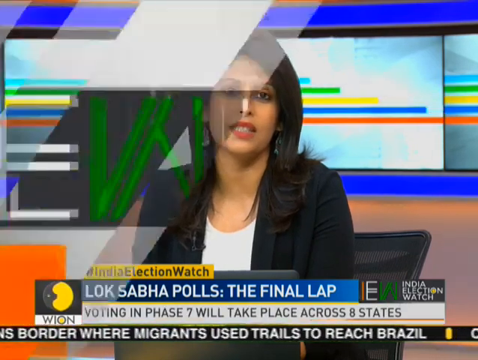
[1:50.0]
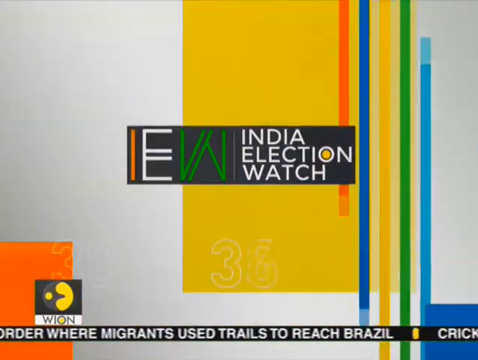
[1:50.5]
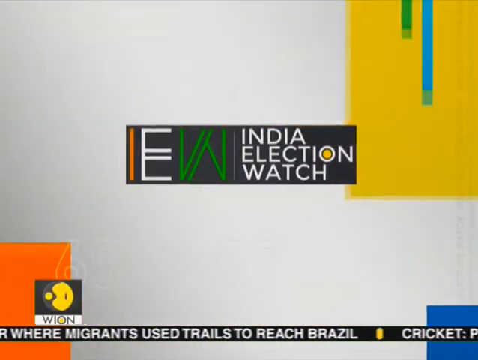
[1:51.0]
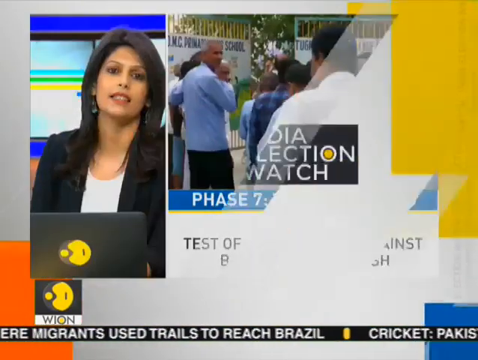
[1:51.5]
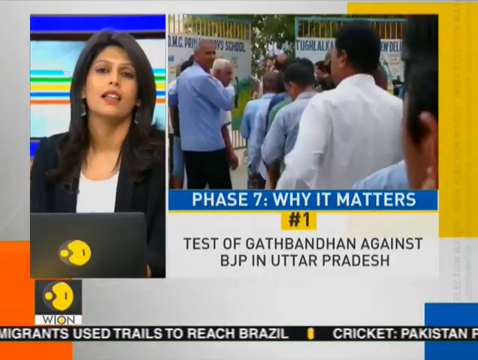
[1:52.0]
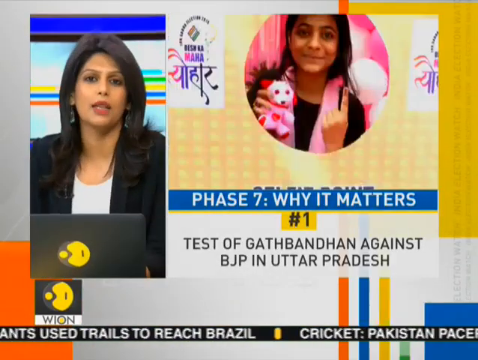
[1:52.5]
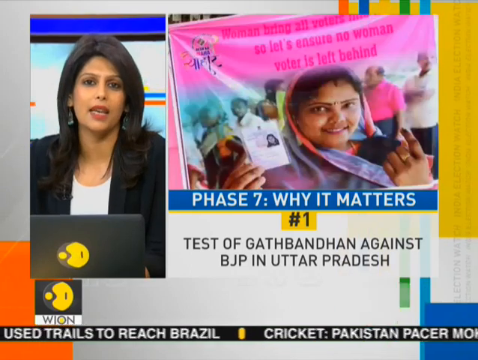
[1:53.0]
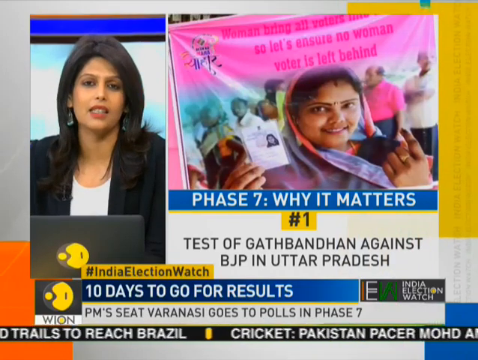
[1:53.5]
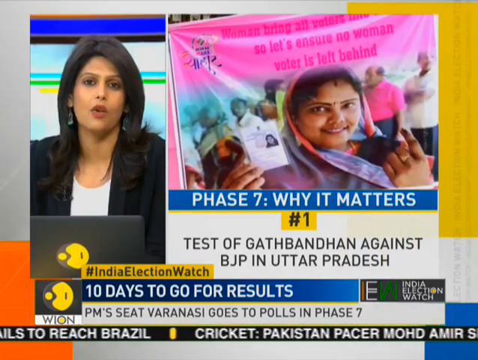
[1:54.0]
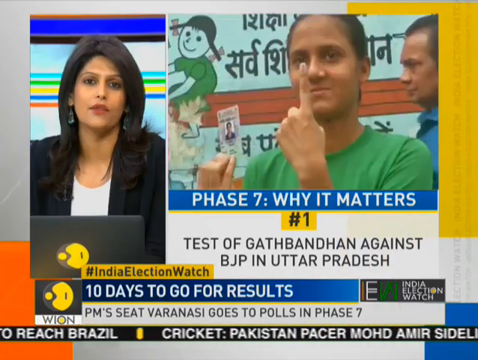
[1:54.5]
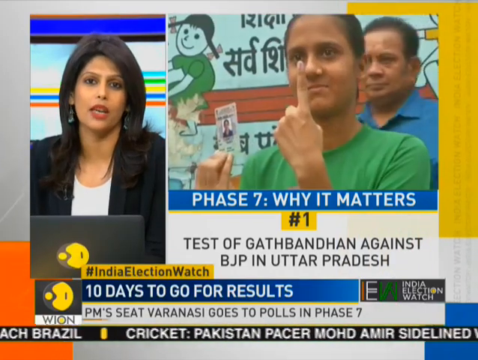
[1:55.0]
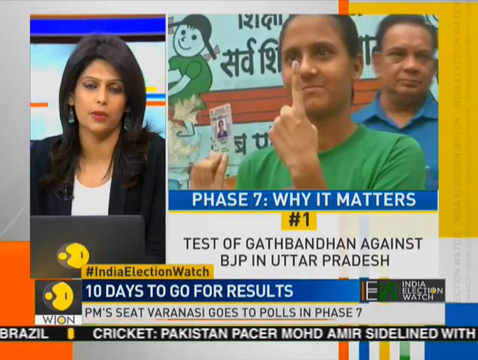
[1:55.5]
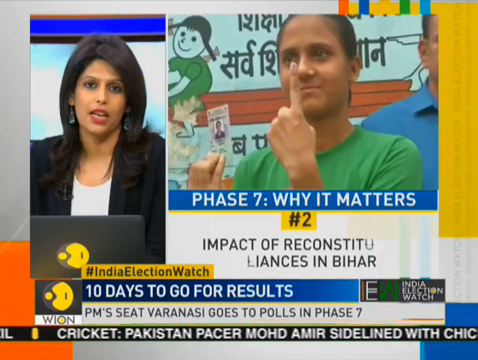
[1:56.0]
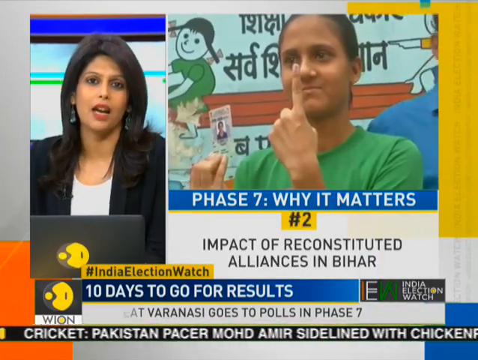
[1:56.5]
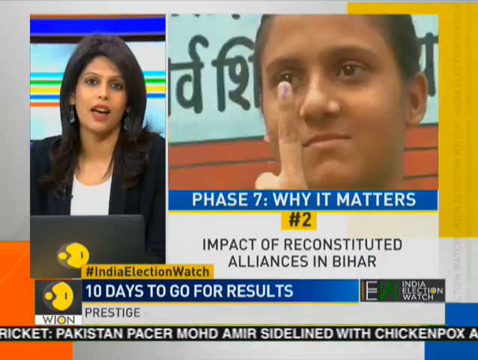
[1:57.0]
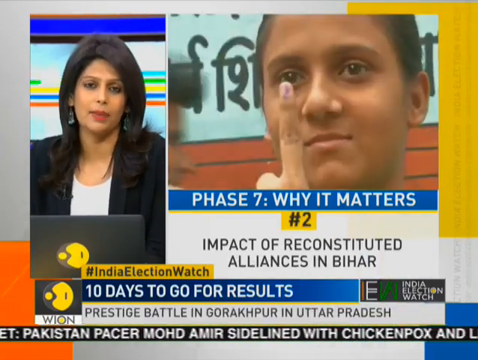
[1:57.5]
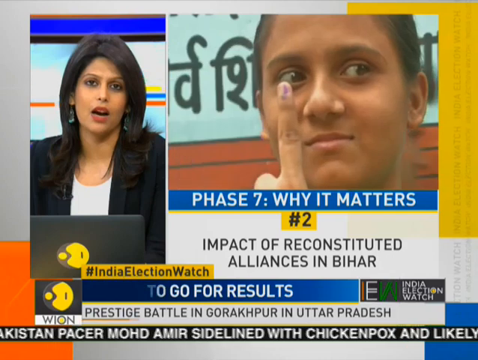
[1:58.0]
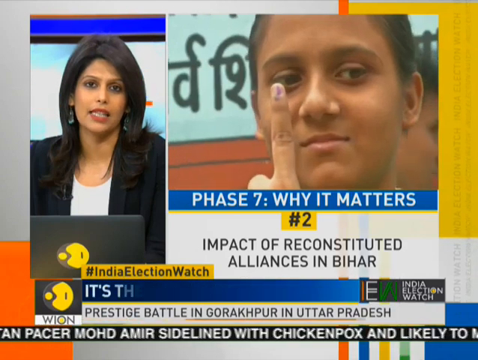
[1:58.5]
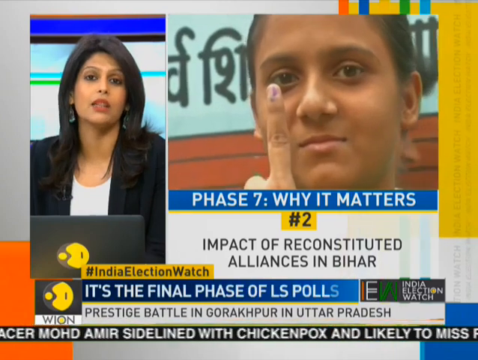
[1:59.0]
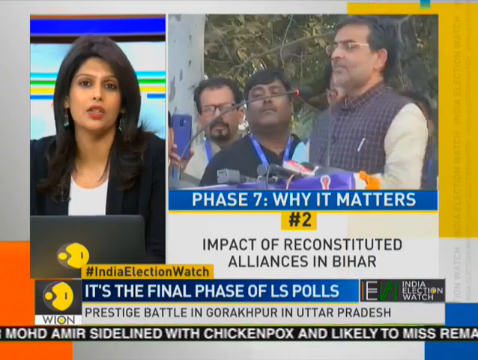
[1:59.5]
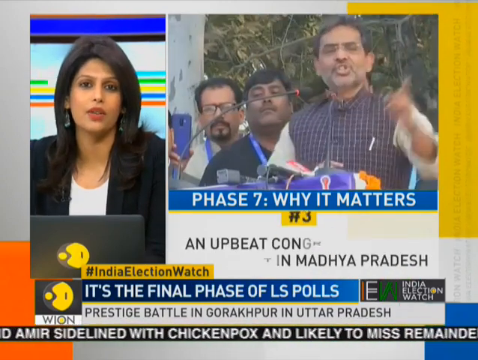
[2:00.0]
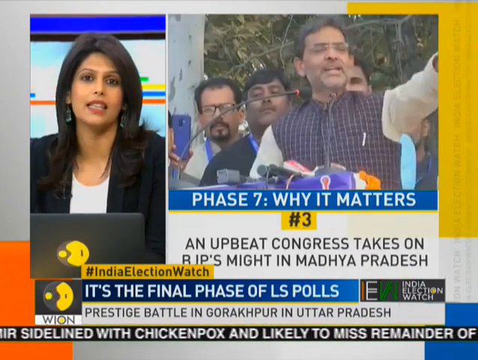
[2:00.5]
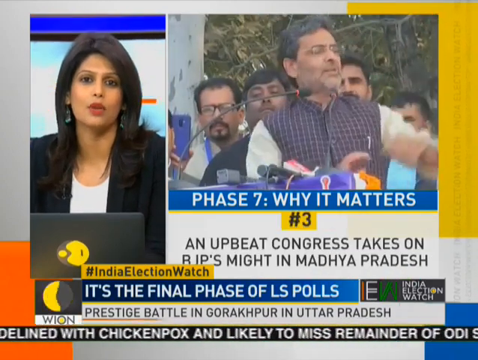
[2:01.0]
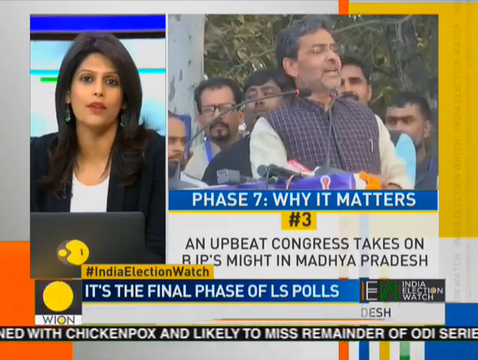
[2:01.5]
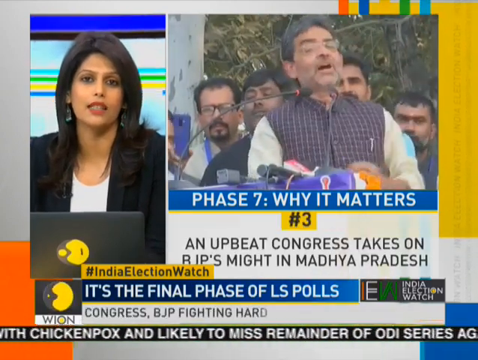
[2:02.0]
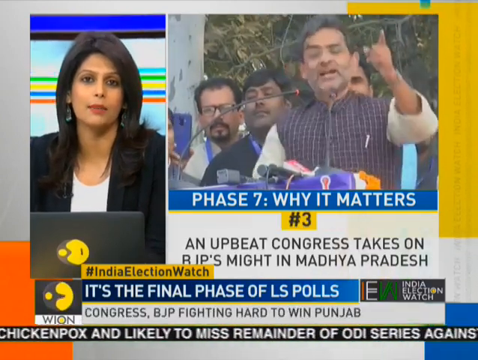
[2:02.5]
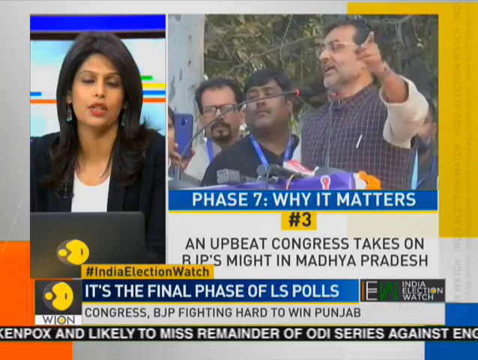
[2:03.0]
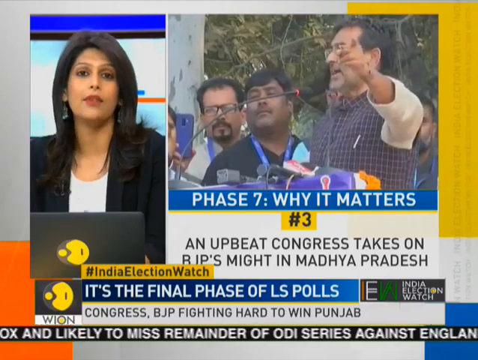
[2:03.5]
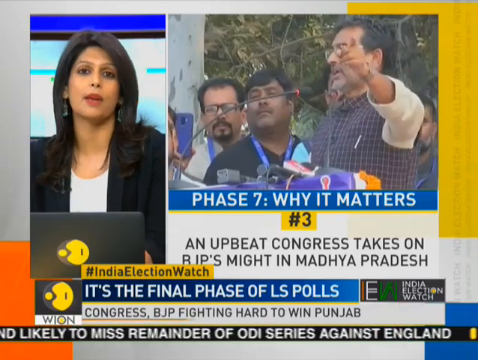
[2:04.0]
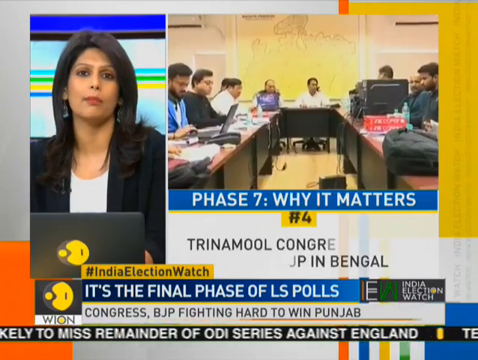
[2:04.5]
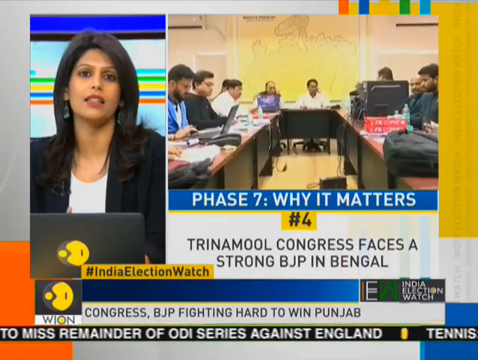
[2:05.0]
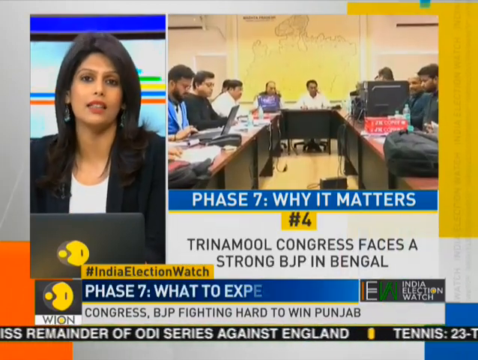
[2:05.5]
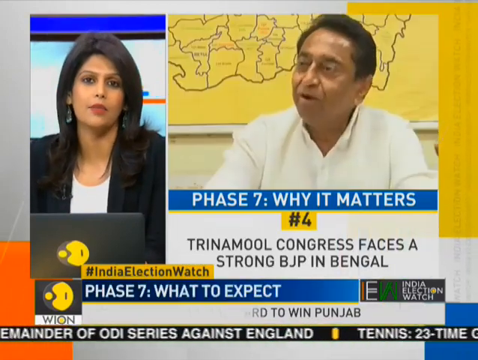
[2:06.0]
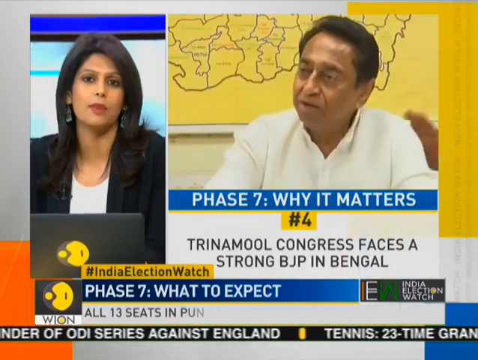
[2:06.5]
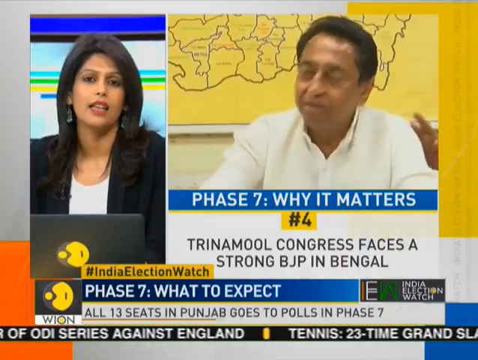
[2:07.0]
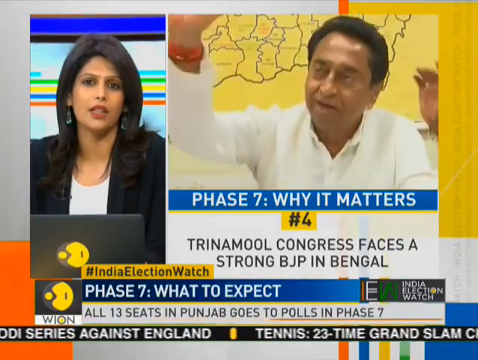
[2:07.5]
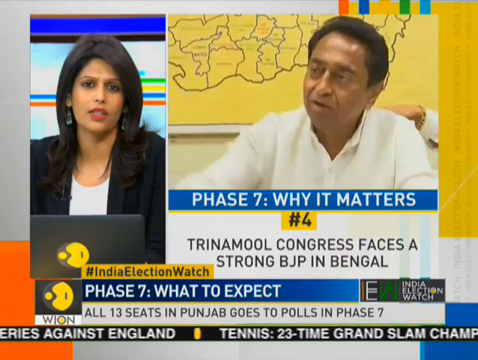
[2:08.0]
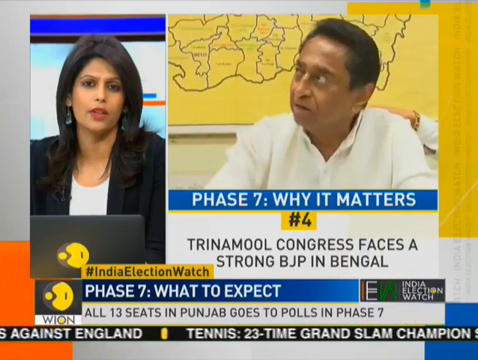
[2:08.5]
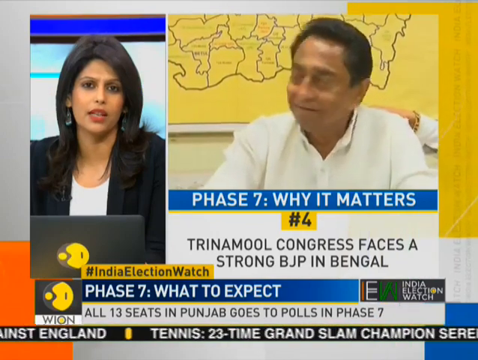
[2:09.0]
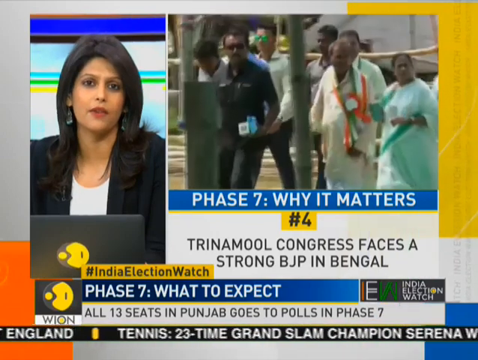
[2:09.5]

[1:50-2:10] The anchor is seated in the newsroom with the laptop and the background screens. The headline reads "#Indian election watch, Lok Sabha polls, the final lap" and says voting in phase seven will take place across eight states, followed by "Indian election." The anchor moves to the left side, her frame still small, while the right side shows another video. Text there reads "phase seven, why it matters" and "#1, test of Ghatbatran against BJP in Uttar Pradesh." People, apparently all men, enter gates and line up. In the next scene, a lady holds a stuffed puppy doll. Another lady holds a picture, apparently of herself, possibly like a passport. Another lady holds a picture, apparently a passport or identification of herself, pointing one upwards; she wears a green T-shirt. In the background is a man in a bluish T-shirt, and at the top left is a drawing of a girl wearing green. Another leader speaks into a microphone, with text for #3 beginning "an upbeat Congress takes on" and Madhya Pradesh. Text for #2 reads "impact of a constituent alliance in Bihar," and the man is surrounded by other gentlemen at the back. #4 reads "Trinamol Congress faces a strong BJP in Bengal." An office like a boardroom or meeting room follows, with people seated in a rectangular format. A leader then speaks, with a map of India behind.